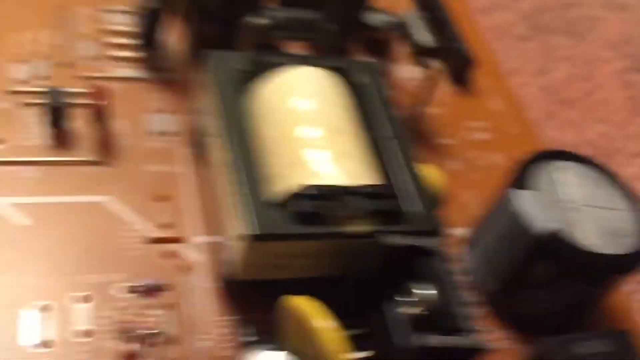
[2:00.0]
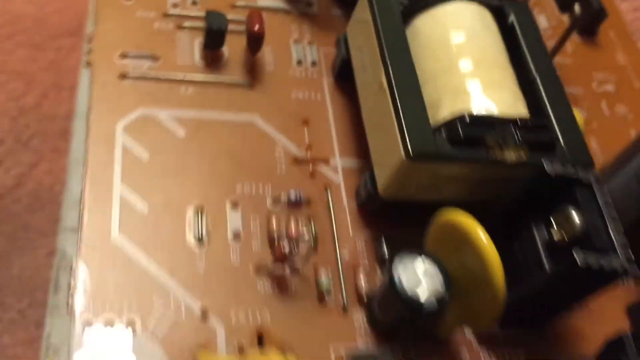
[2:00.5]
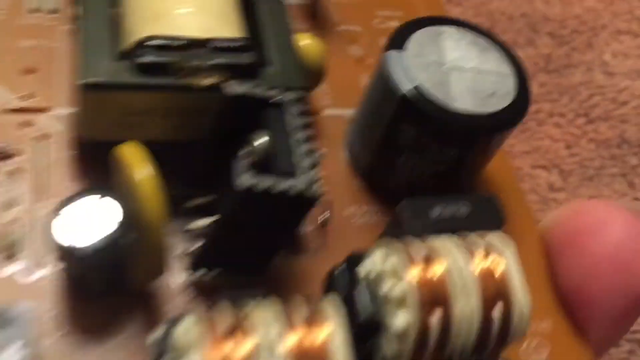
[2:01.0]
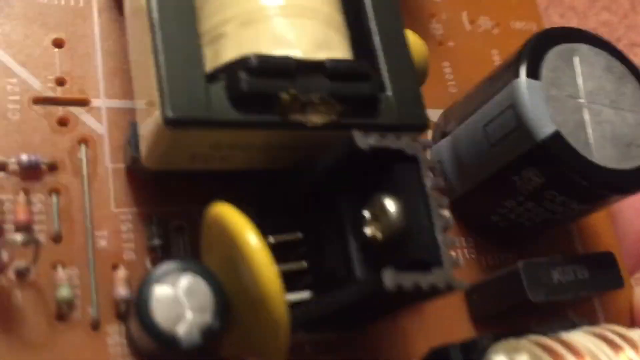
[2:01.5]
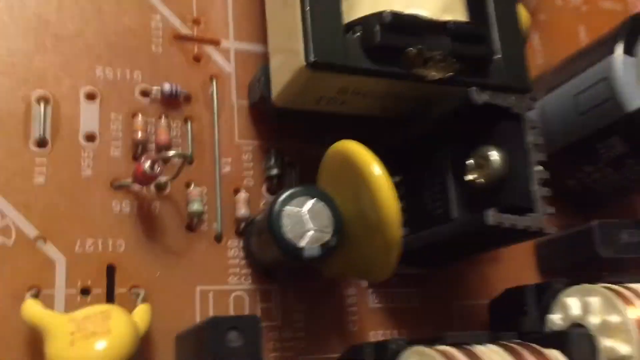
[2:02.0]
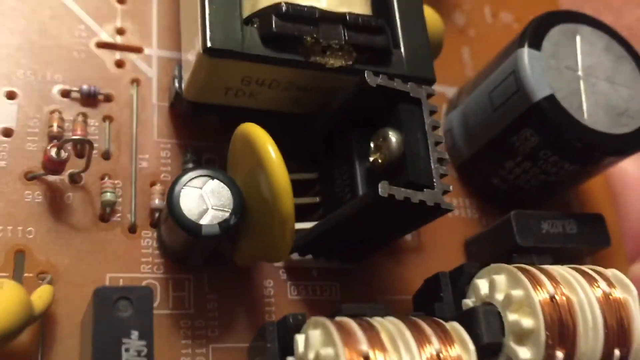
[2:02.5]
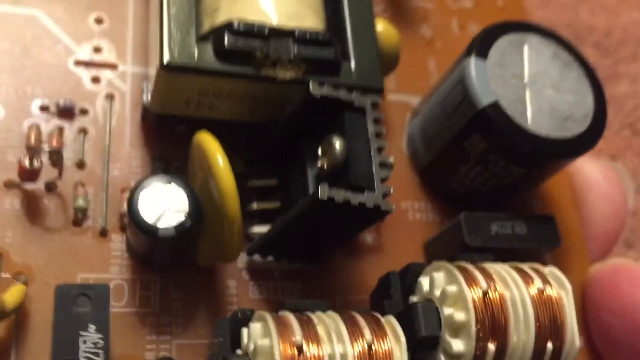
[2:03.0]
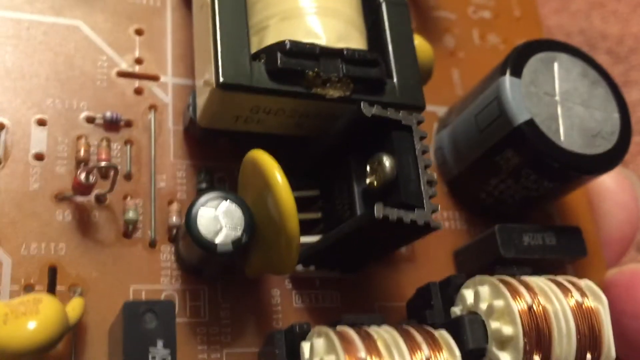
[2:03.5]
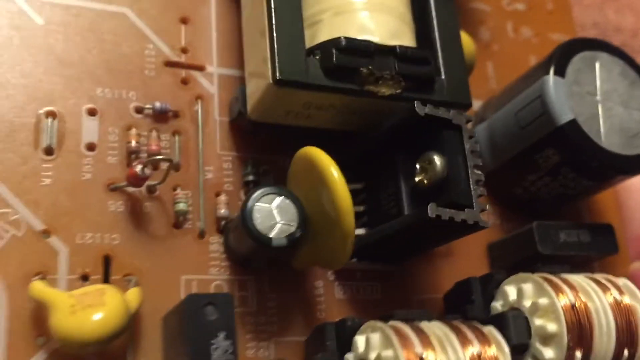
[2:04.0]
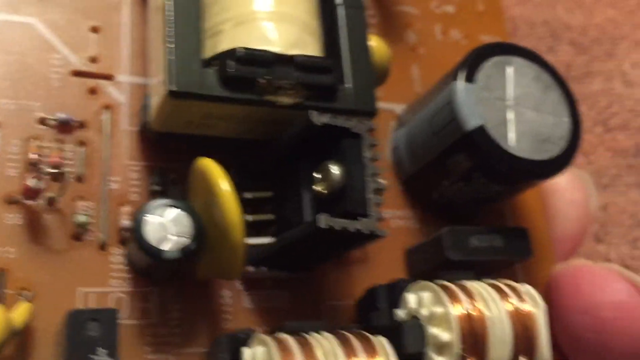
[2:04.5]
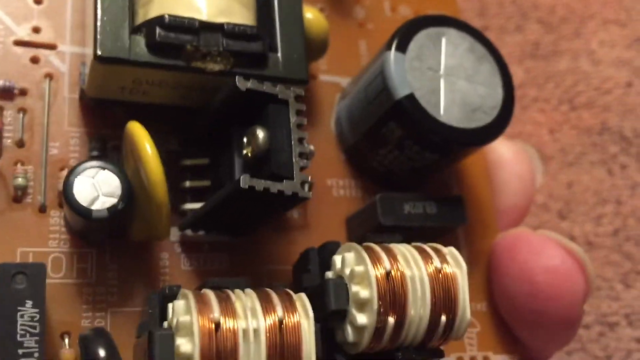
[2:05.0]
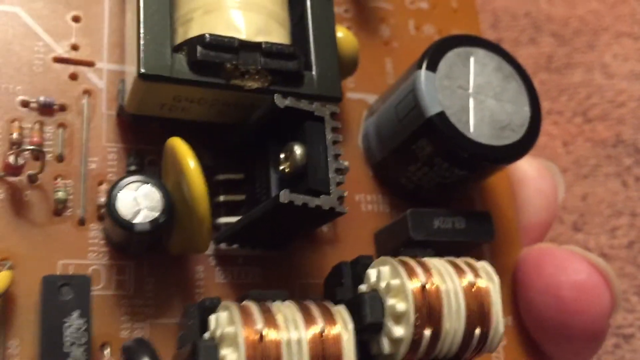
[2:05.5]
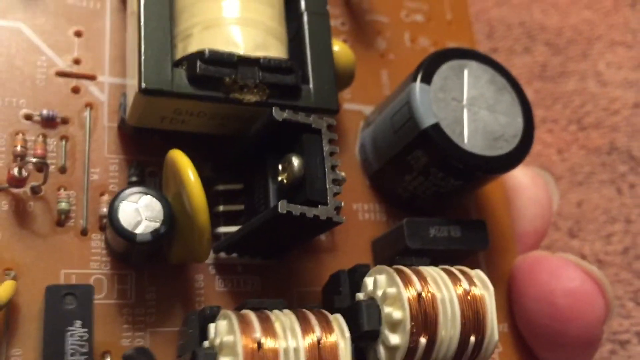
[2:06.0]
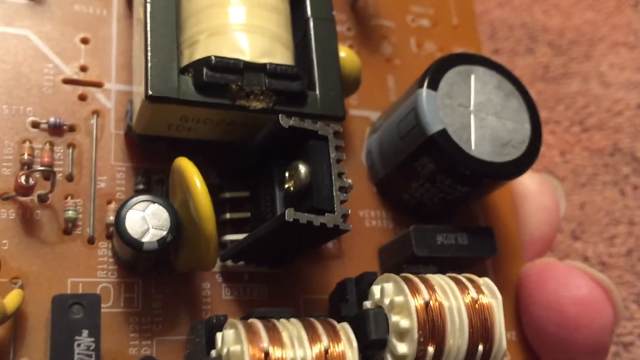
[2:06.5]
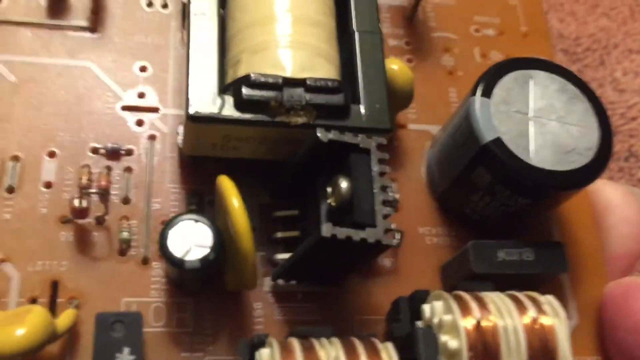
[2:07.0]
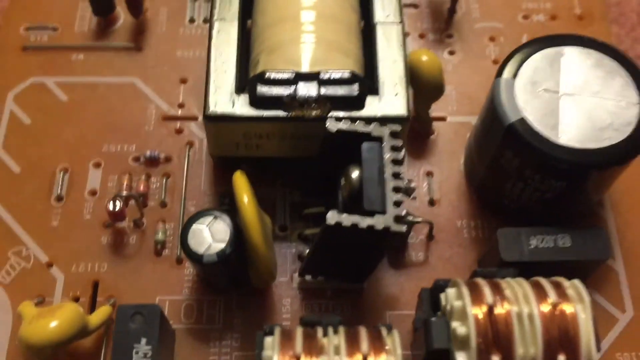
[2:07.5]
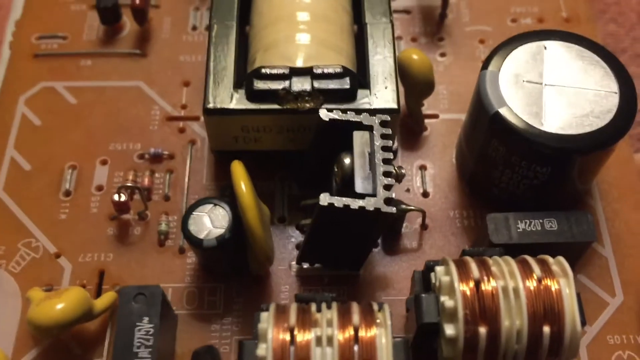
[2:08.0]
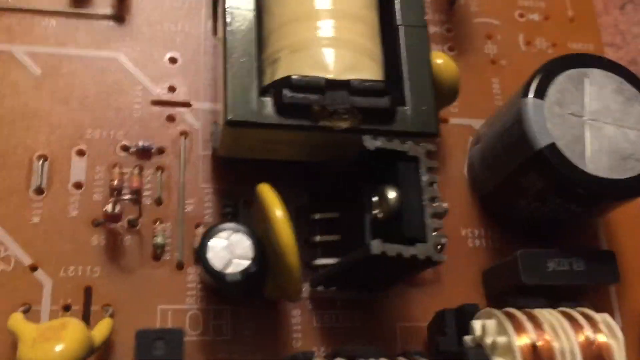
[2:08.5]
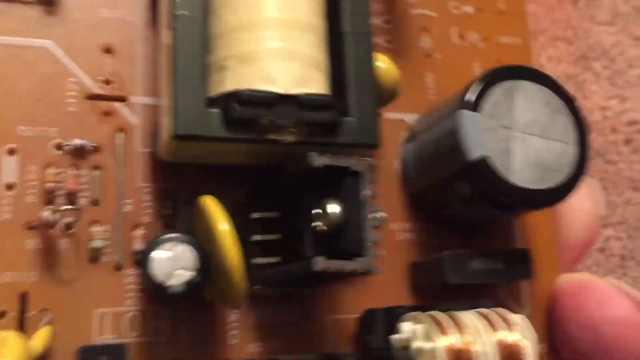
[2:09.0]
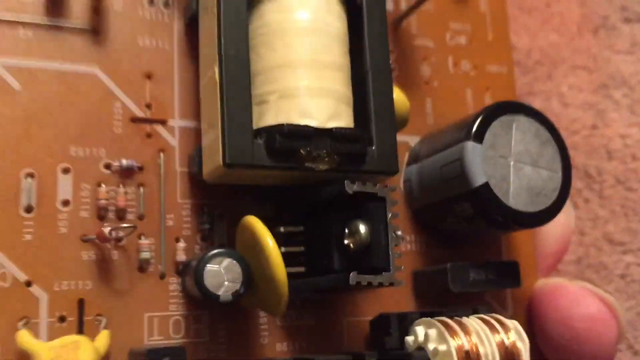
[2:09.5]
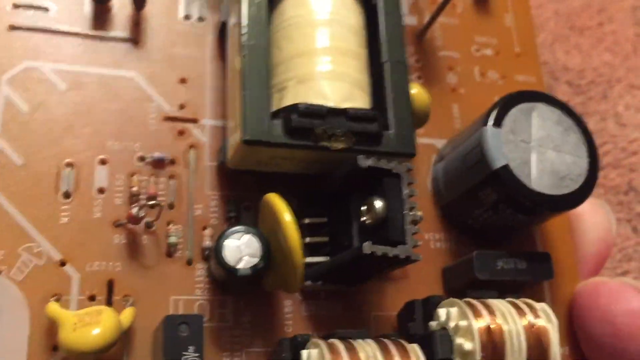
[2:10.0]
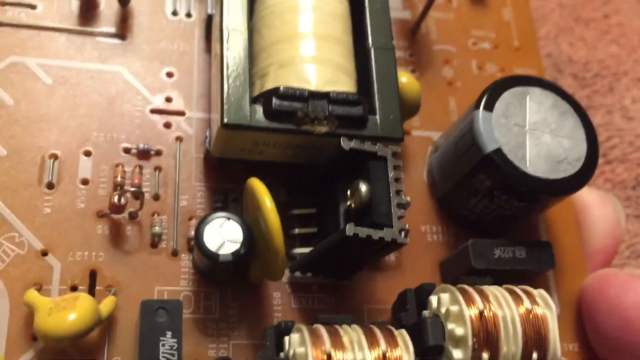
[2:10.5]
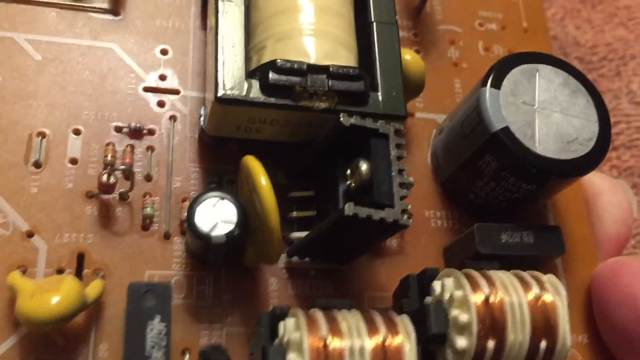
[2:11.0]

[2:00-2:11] On the front side, the person's index and middle fingers hold the board on the right side. The camera zooms in: inside the rectangle cutout there is a sort of metallic dot facing the yellow disc on the left. Further inside, near the end of the board, are three sort of metal rungs facing up and toward the camera. On the right end near the fingers is a big black cylinder, much wider than all the others, with a silver-gray top. Below that is a rectangular box with a number inscribed on it, too blurry to read exactly.